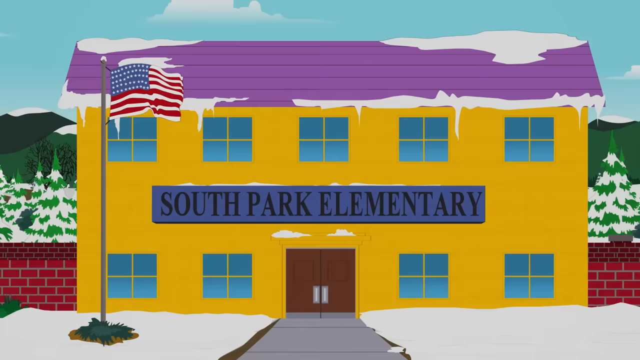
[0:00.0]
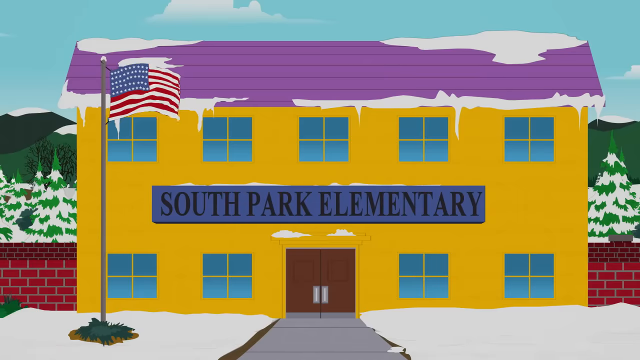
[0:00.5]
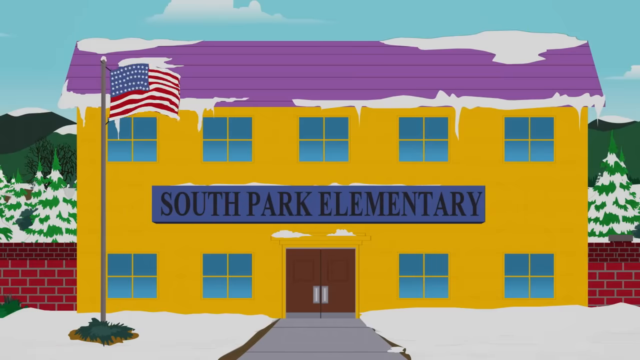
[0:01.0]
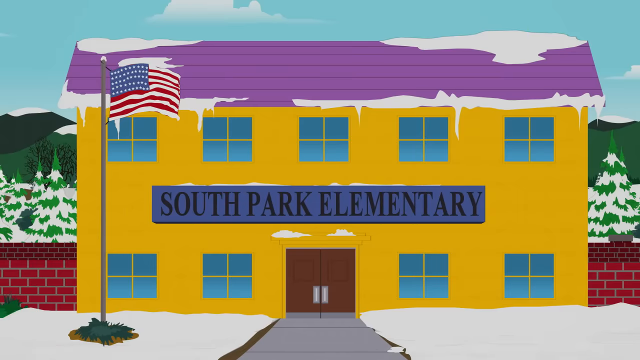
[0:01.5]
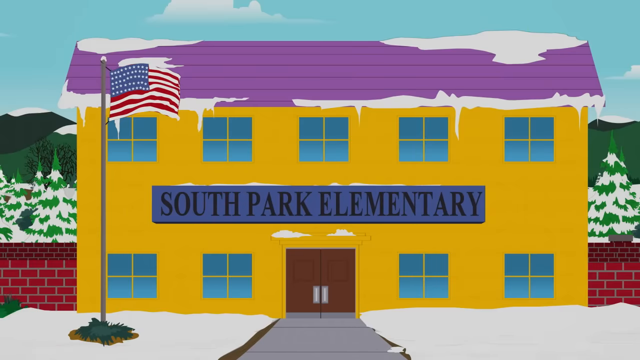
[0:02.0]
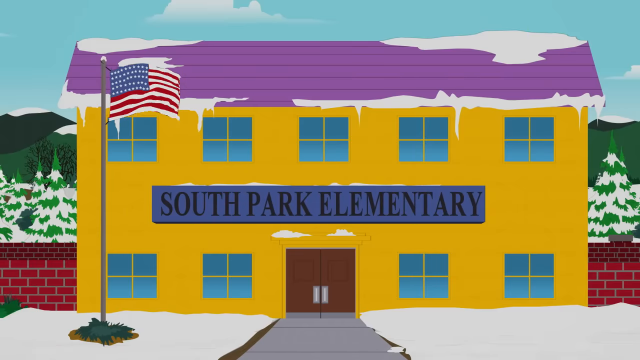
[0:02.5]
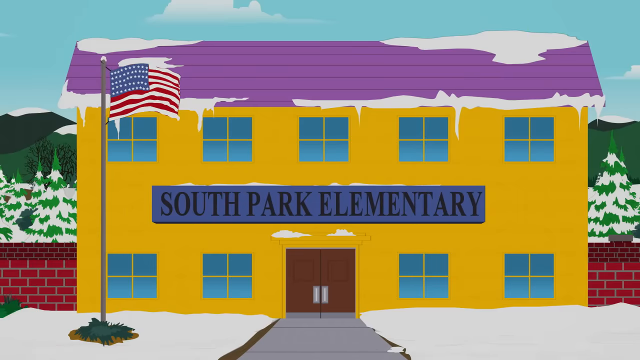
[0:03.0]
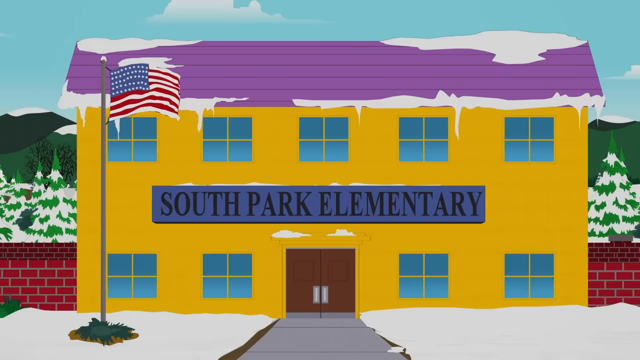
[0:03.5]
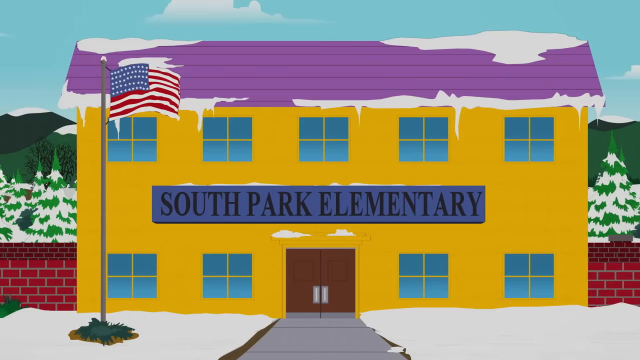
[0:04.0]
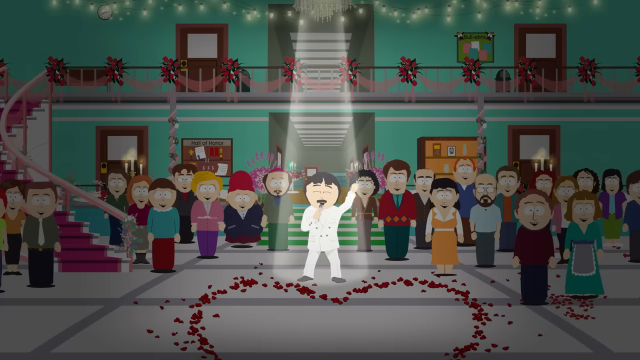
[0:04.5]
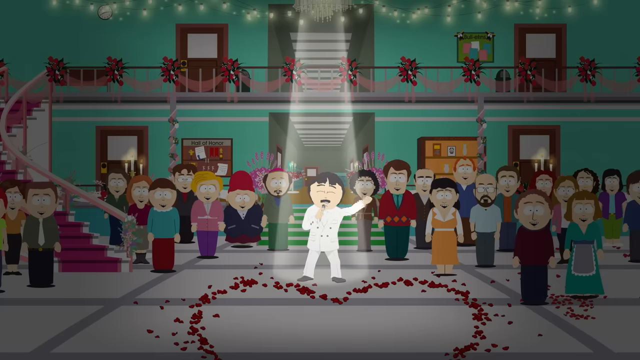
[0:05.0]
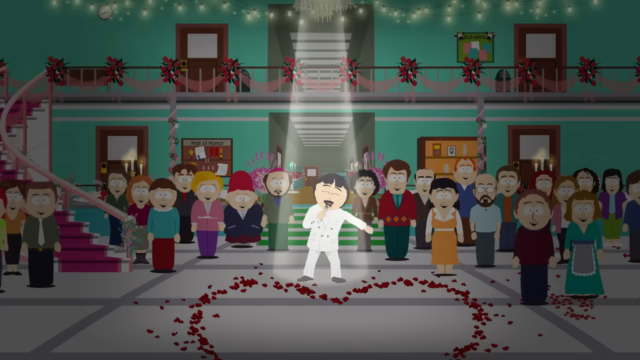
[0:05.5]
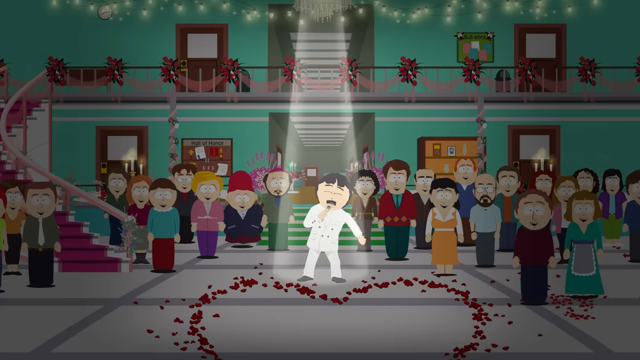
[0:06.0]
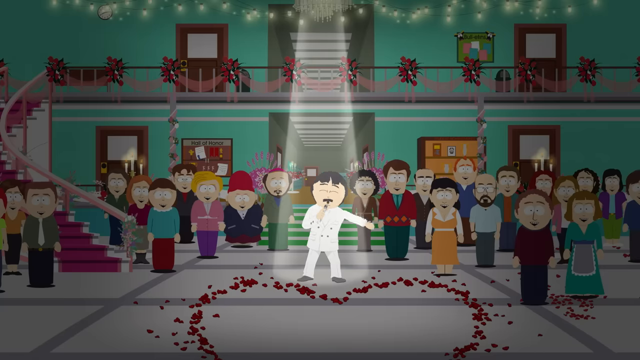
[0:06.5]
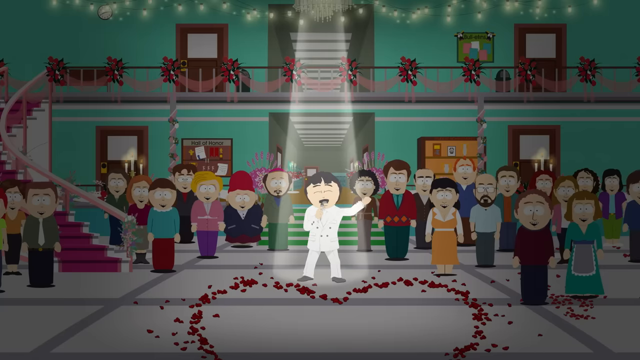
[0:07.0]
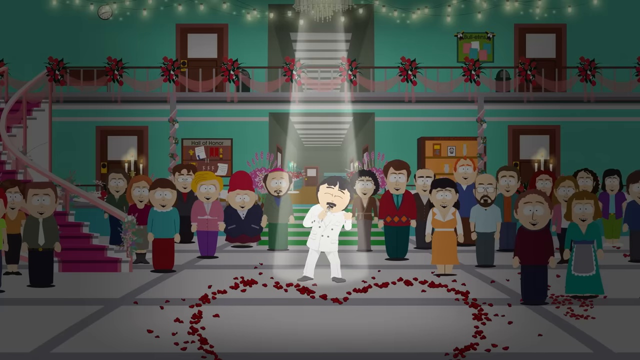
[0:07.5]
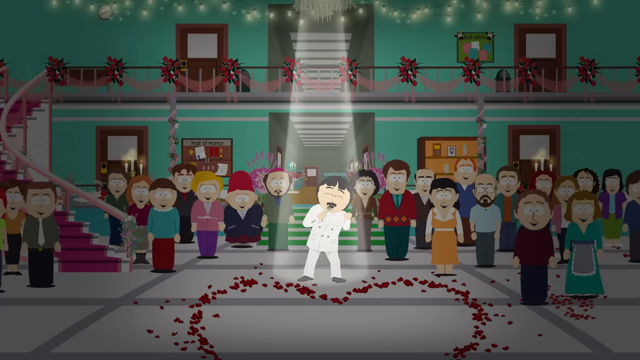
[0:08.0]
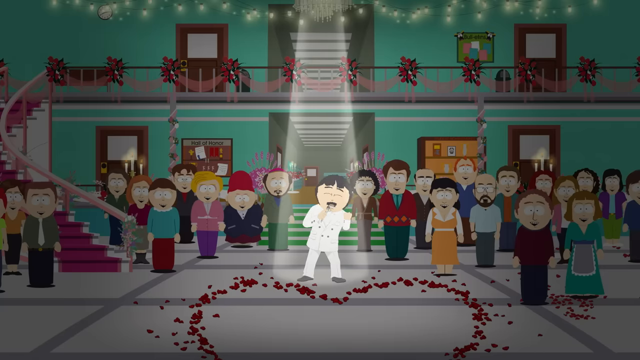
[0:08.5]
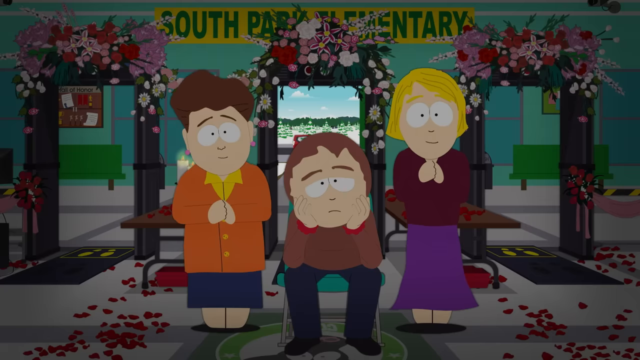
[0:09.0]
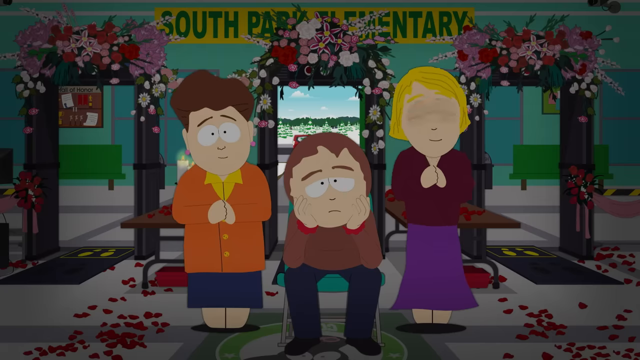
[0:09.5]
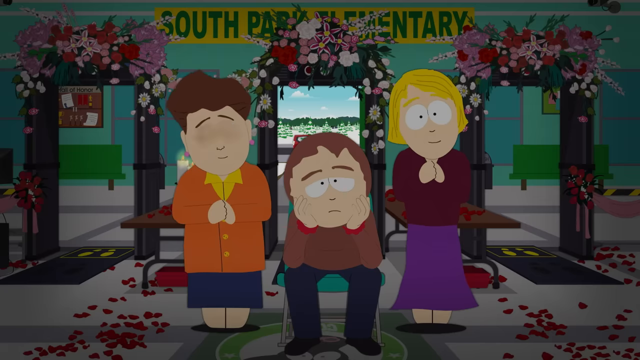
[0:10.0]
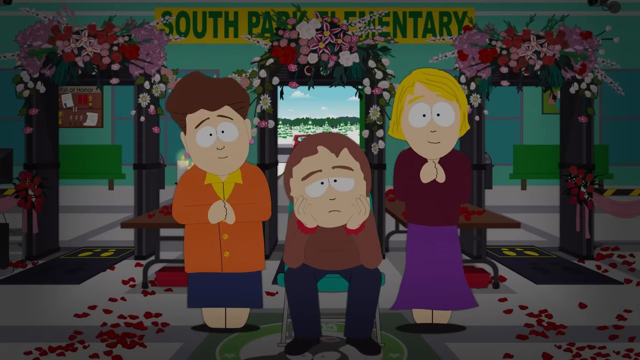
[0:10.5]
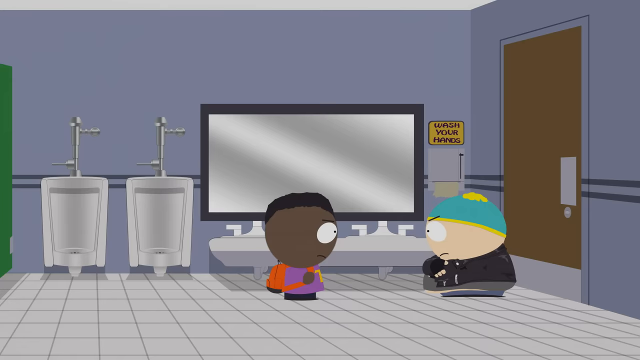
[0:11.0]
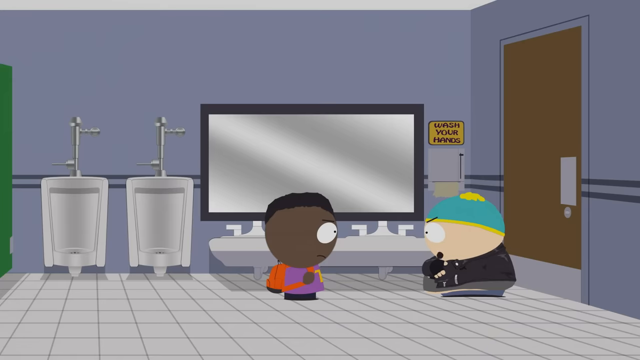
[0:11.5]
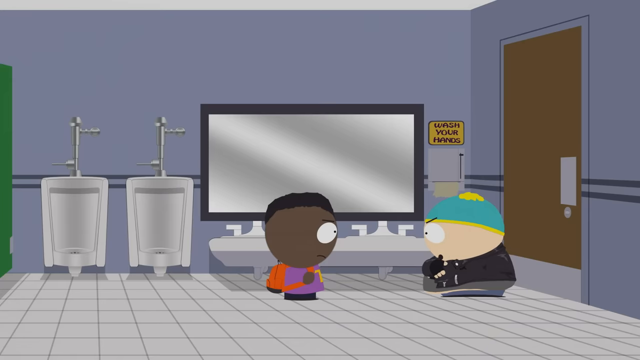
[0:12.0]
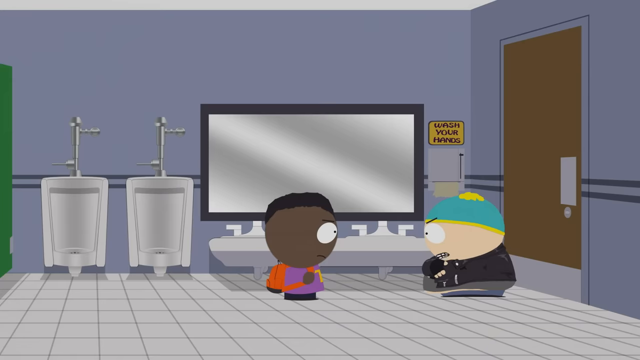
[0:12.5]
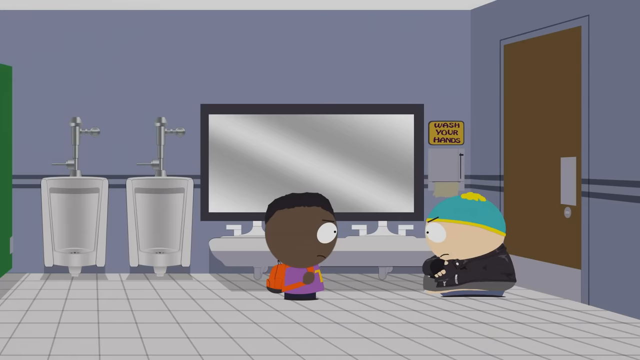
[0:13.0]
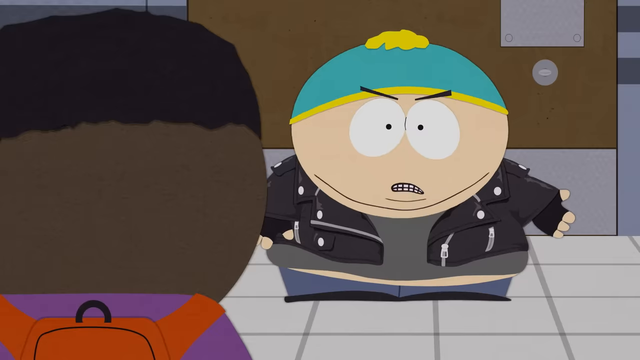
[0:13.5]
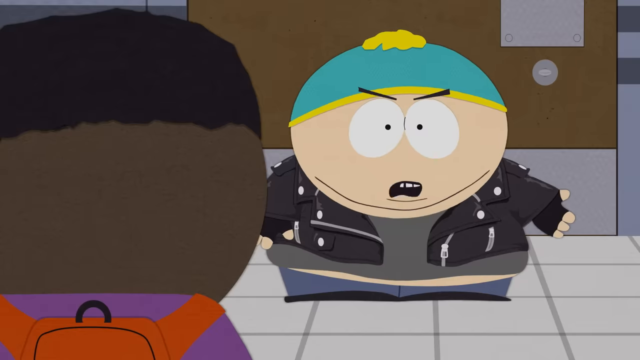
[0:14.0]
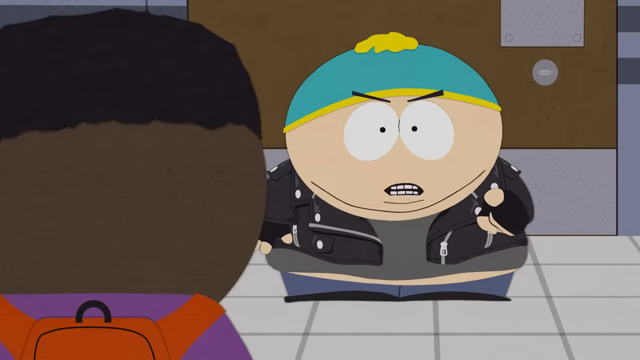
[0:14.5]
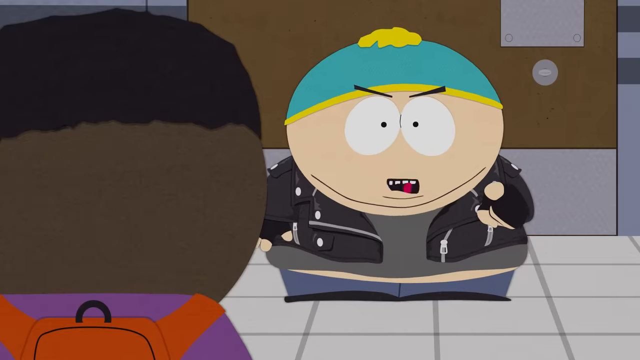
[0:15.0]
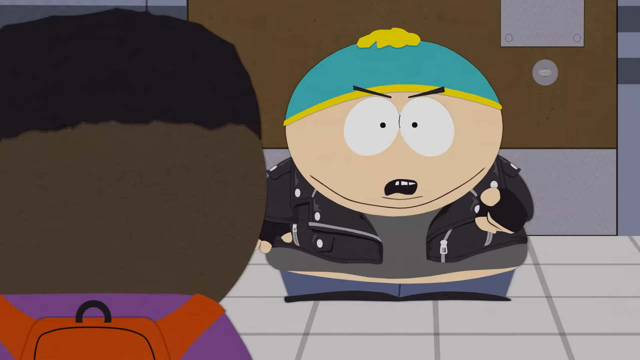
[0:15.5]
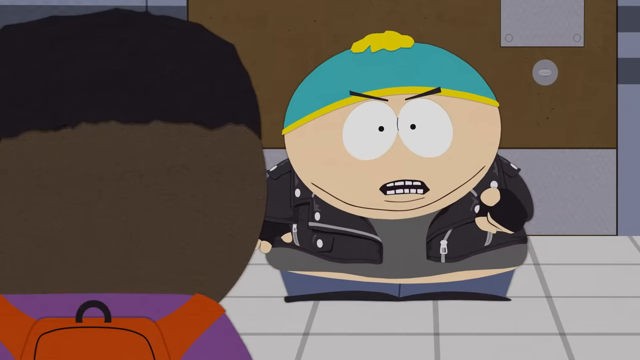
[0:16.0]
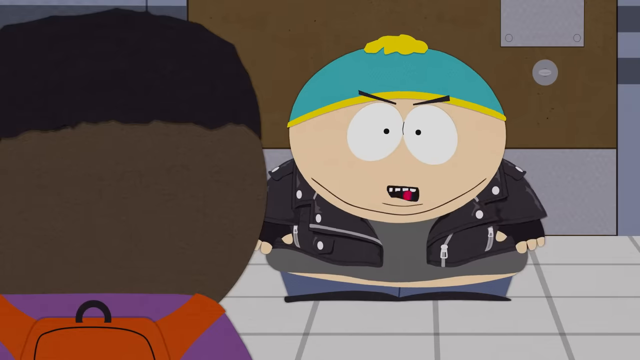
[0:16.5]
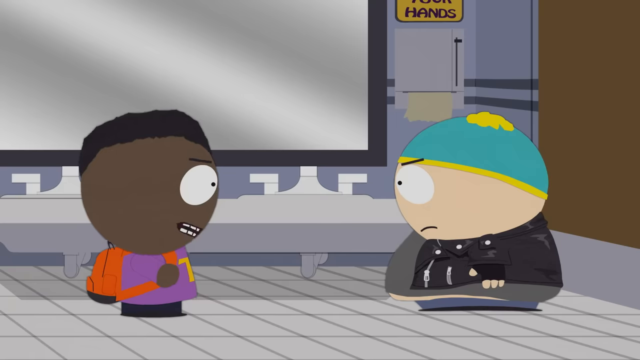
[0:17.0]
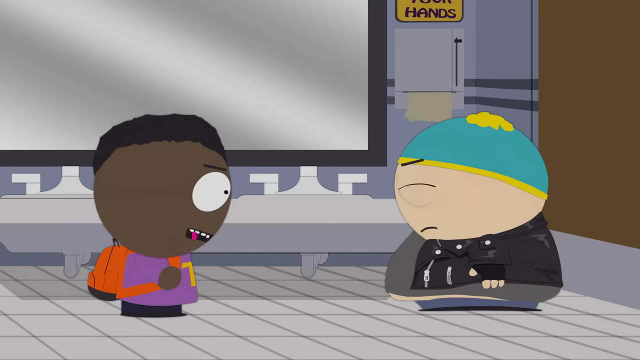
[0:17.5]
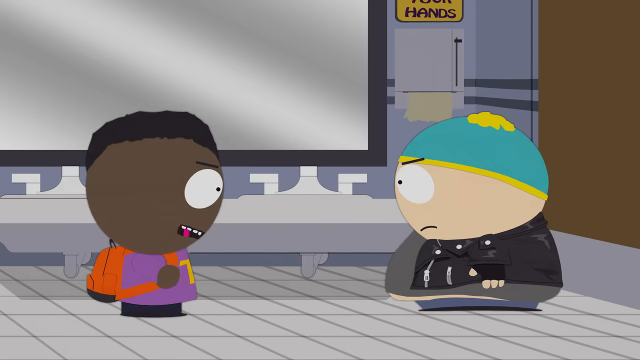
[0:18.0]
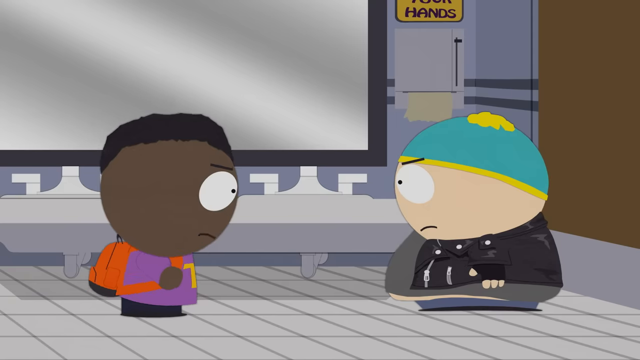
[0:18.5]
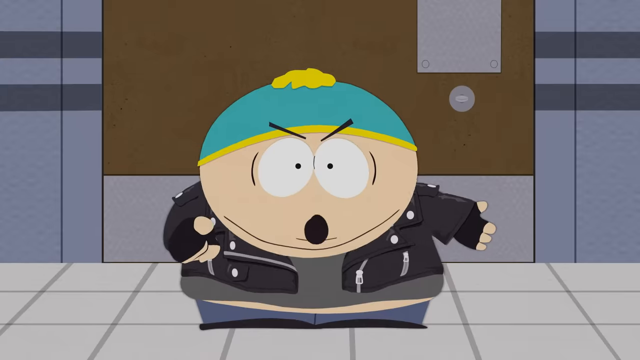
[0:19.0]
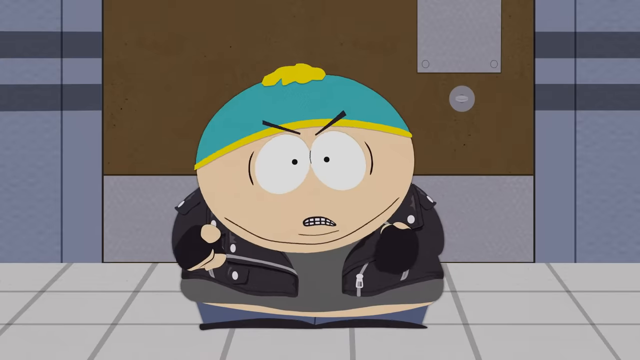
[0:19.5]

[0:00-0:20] A metal flag waves on the left-hand side outside a school, and it is snowy outside. The scene cuts to inside the building, where someone in a white outfit is singing and a man looks very unimpressed. It then jumps to a bathroom where two short characters appear to be arguing with one another. The school has a purple roof and a yellow exterior, with five windows on the first floor and four windows along the bottom floor. The windows are blue and split into four panes. The front doors are brown double doors. Above the doors and below the top row of windows is a large, long blue sign that reads "South Park Elementary" in black writing. A grey path leads up to the front door, and there appears to be grass on either side, currently covered in snow. There is also snow on top of the roof and on some of the trees and hills in the background. Behind the school is a red brick wall with two layers: the bottom layer has larger, brighter red bricks, and the top layer has smaller, darker red bricks with white grout or mortar between them.